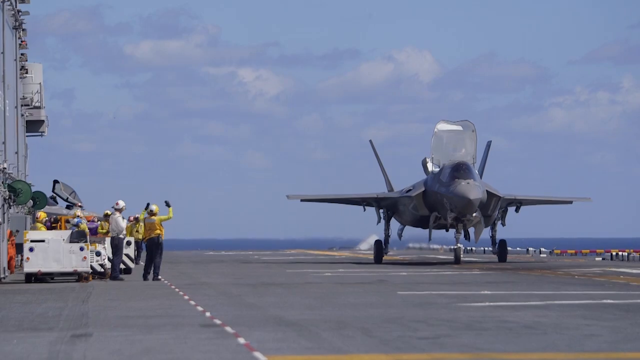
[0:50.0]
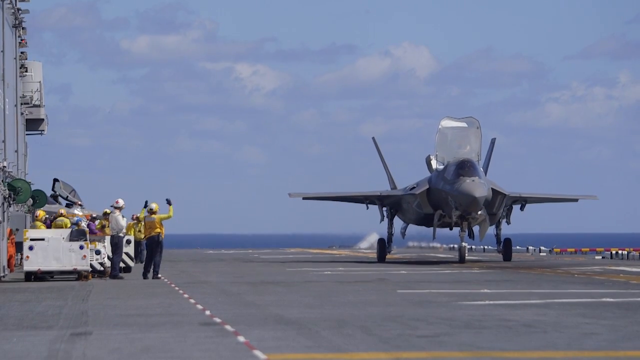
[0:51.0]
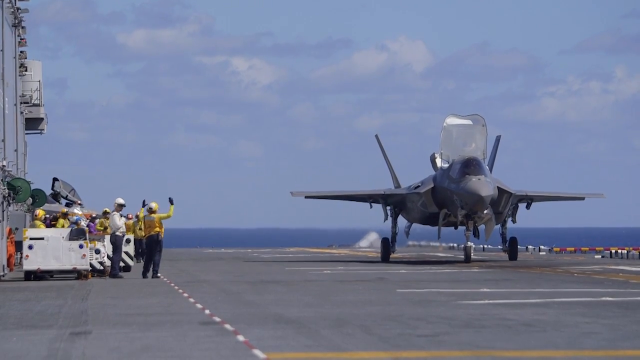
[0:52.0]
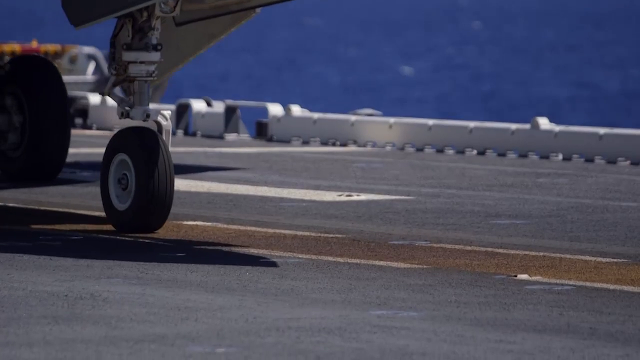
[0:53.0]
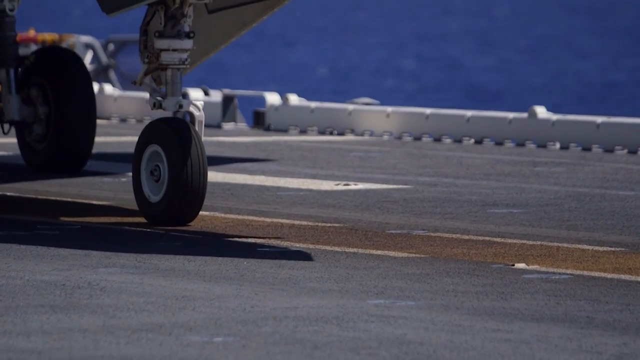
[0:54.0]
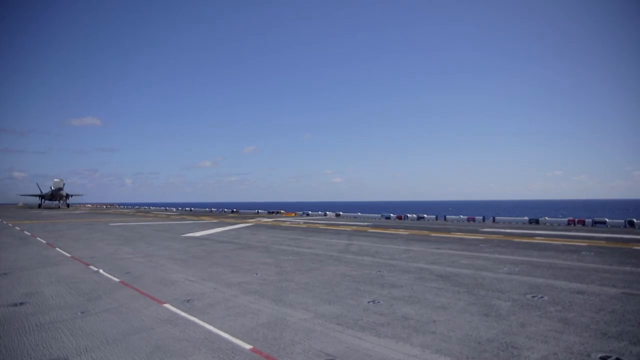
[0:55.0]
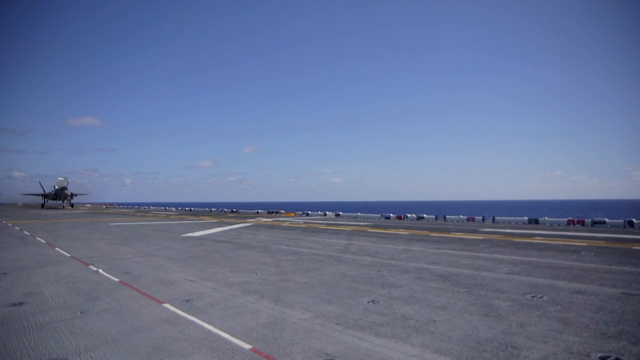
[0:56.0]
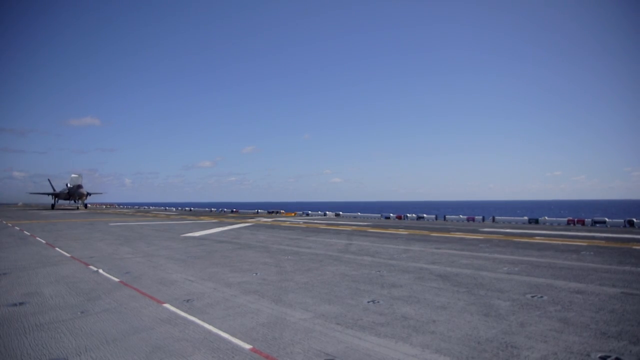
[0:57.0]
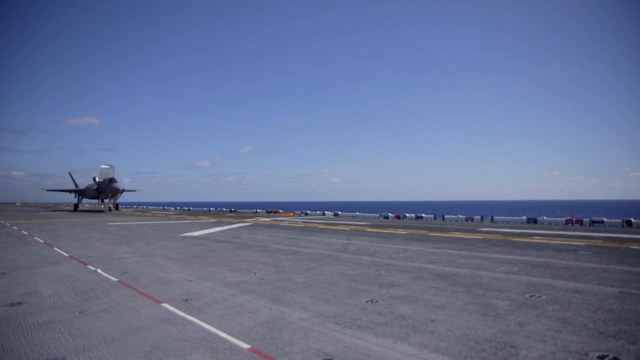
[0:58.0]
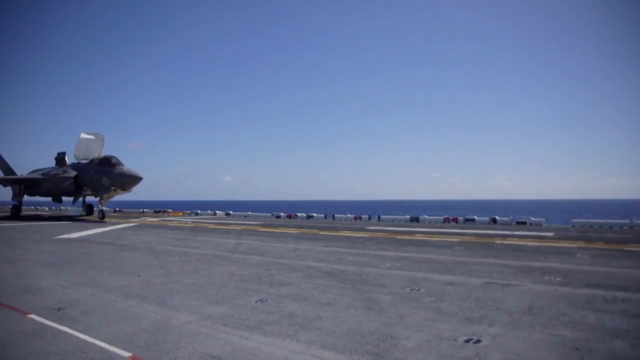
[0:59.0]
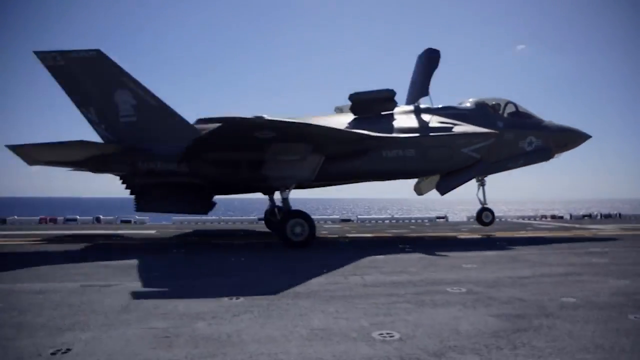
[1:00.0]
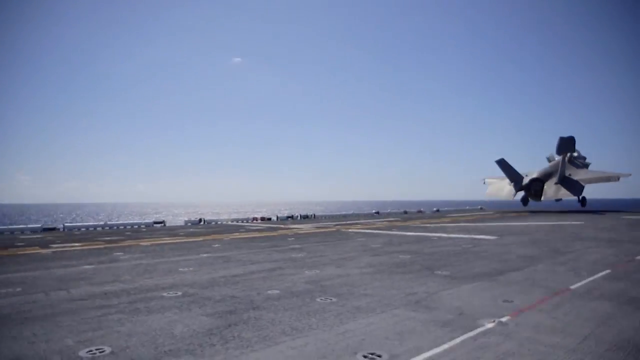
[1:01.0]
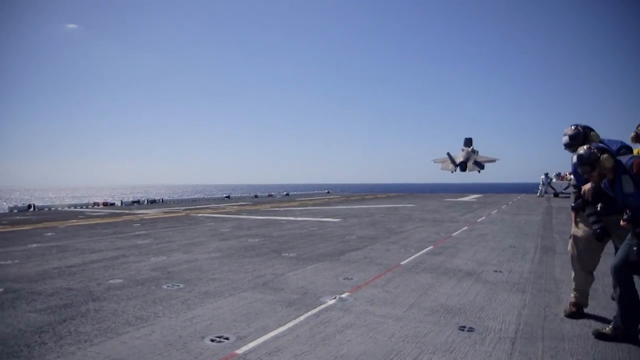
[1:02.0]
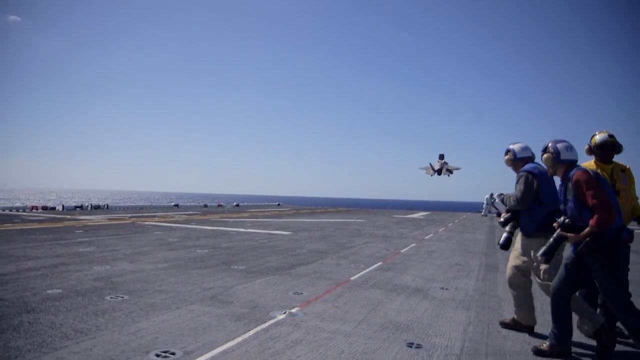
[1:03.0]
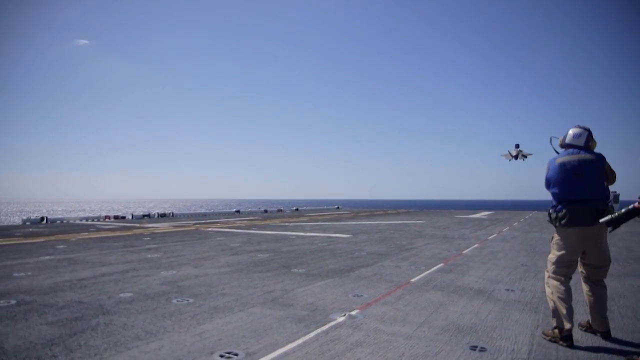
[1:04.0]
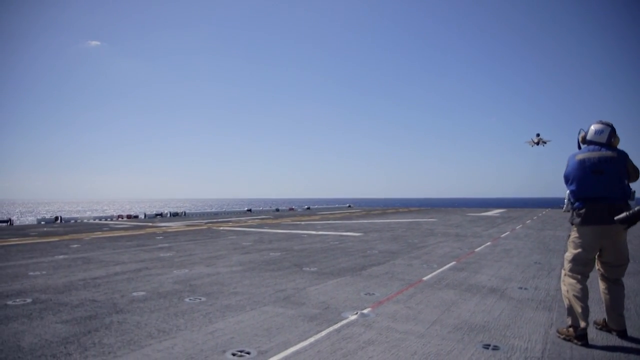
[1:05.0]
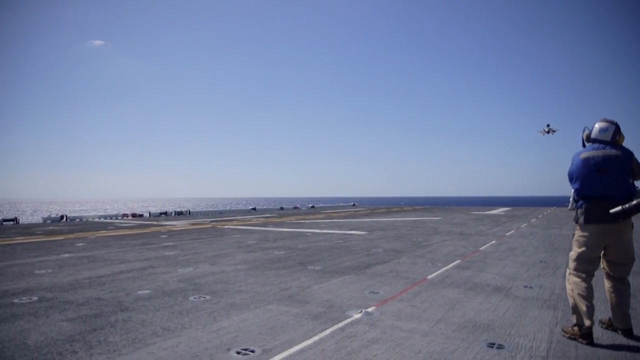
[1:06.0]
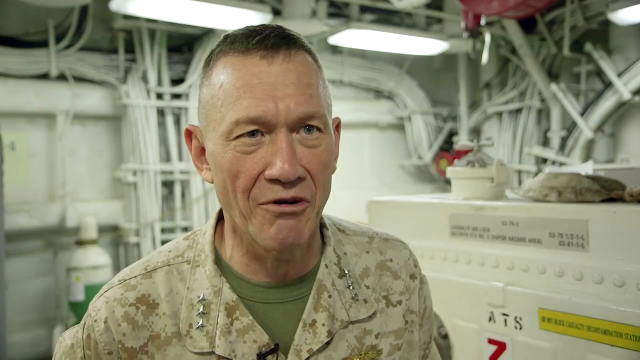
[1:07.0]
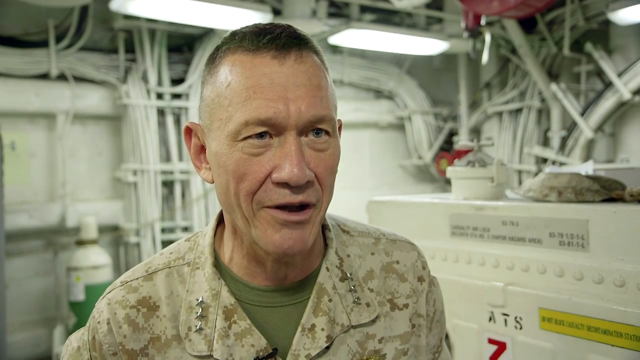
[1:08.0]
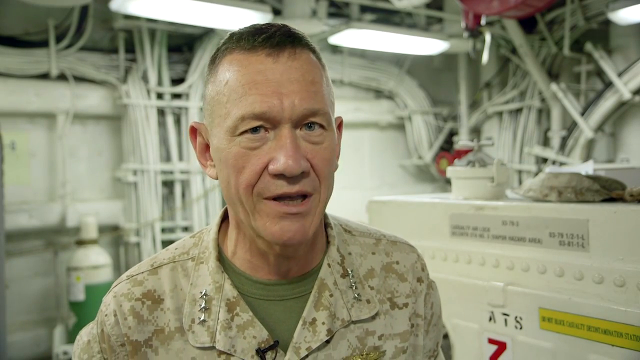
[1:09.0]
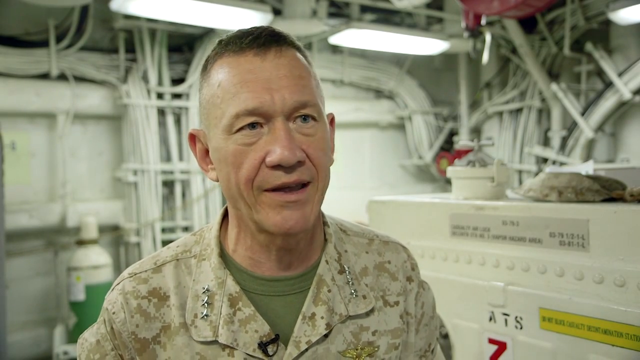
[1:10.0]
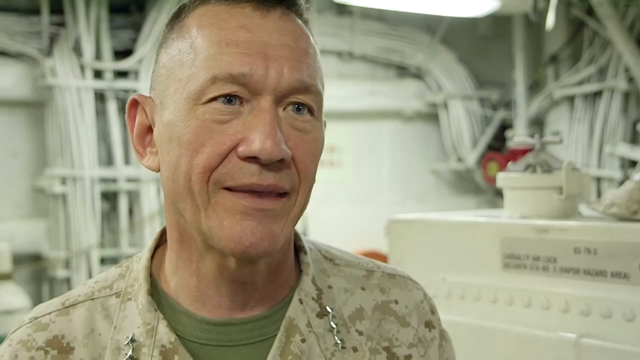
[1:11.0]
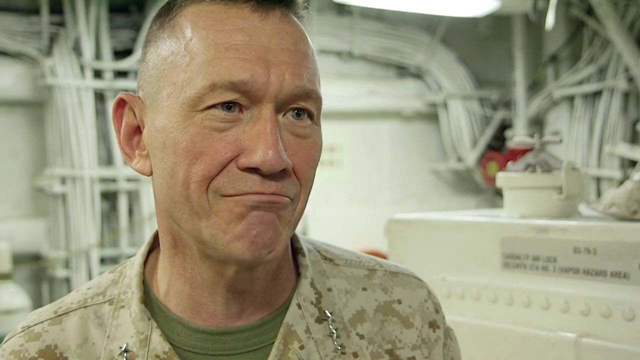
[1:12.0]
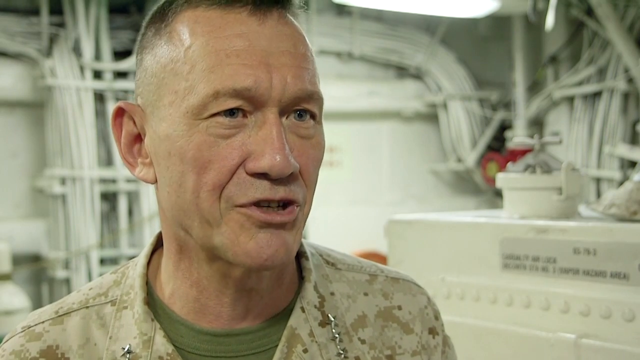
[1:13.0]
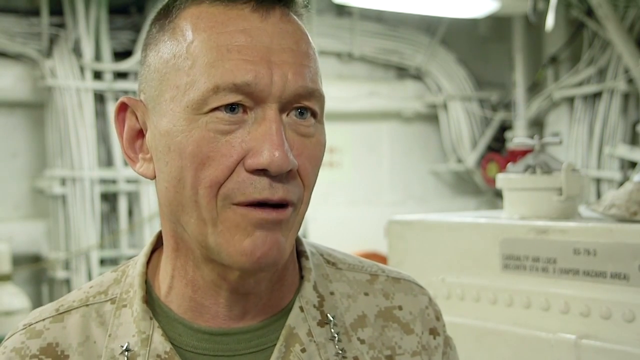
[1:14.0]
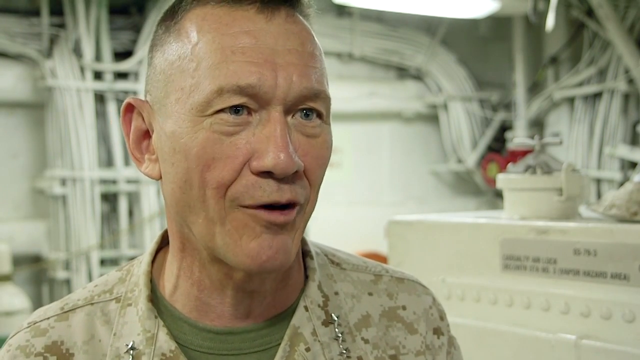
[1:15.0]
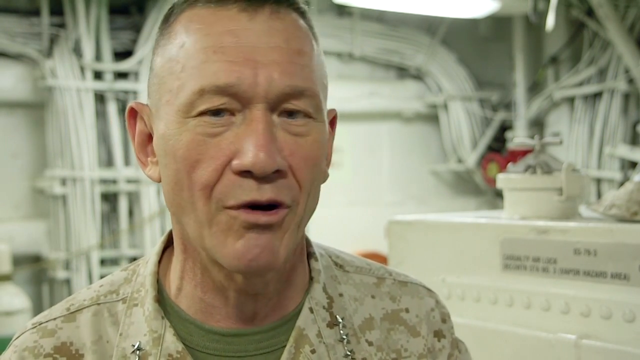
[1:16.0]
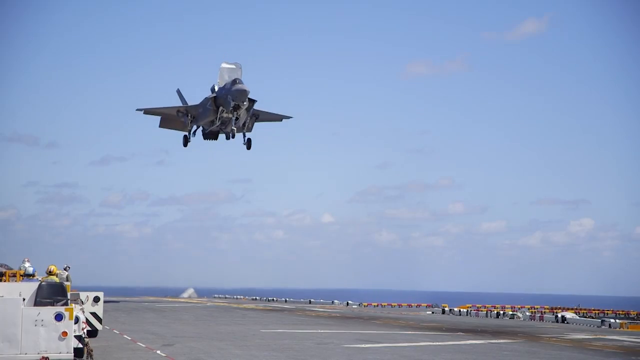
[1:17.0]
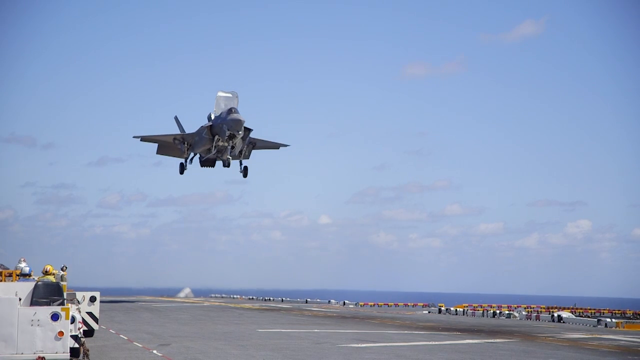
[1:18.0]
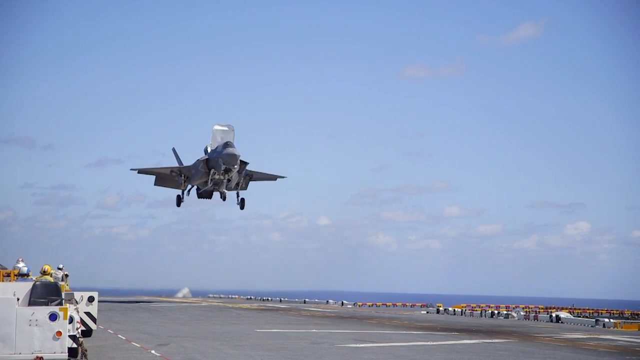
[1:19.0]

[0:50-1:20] The jet, on the right side, has landed on the carrier's flight deck, and people on the left side are waving at it. The scene changes to the wheels underneath the jet as it slowly moves forward. From a different angle, the jet is on the left side of the flight deck and gains speed. The camera moves with the jet, turning to the right as the jet continues forward, showing the right side of the jet moving very fast and the pilot in the cockpit. The jet takes off, lifting off the flight deck and flying far up into the sky. On the right side are flight officers or landing officers: one group of three men is very close, and more men are in the distance to the right. The scene then changes to the lieutenant general again, in a lower part of the ship, being interviewed and talking while looking toward the right. Next, a jet lands on the carrier the same way, descending vertically, while the landing officers on the left side wave both arms in the air, signaling for it to land.